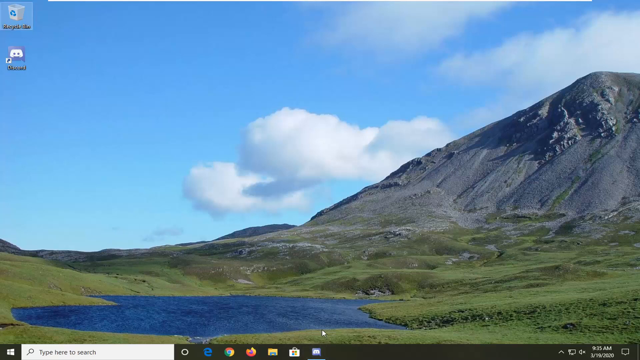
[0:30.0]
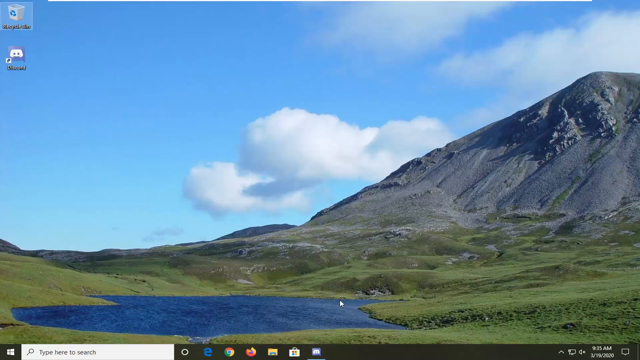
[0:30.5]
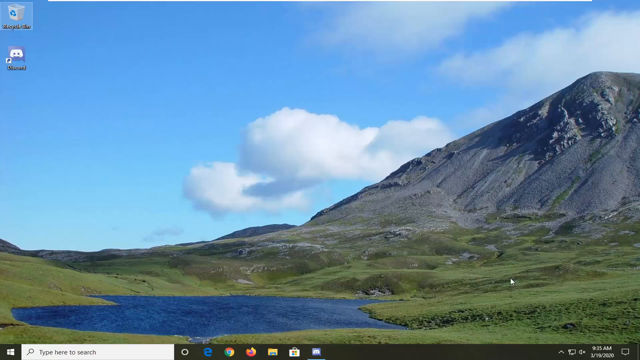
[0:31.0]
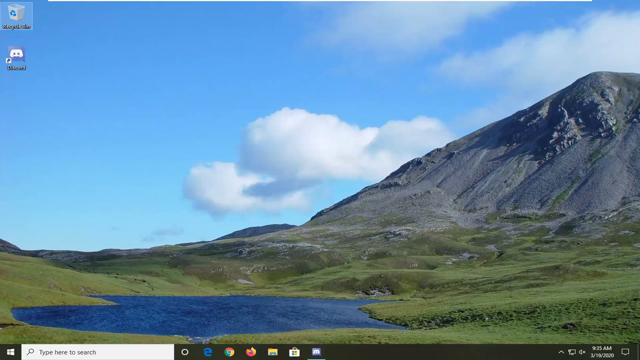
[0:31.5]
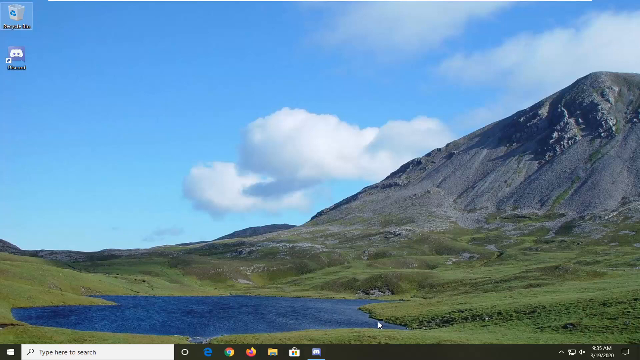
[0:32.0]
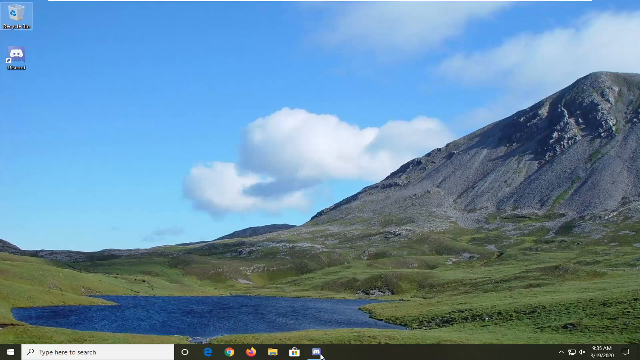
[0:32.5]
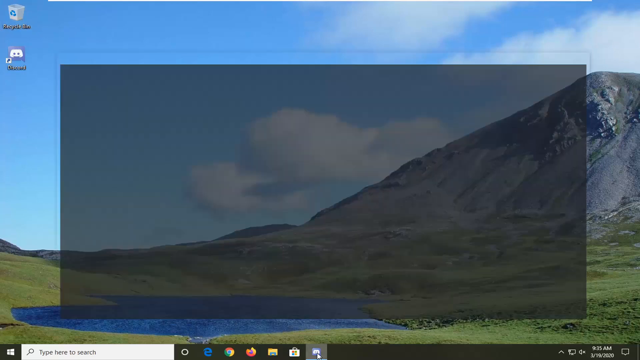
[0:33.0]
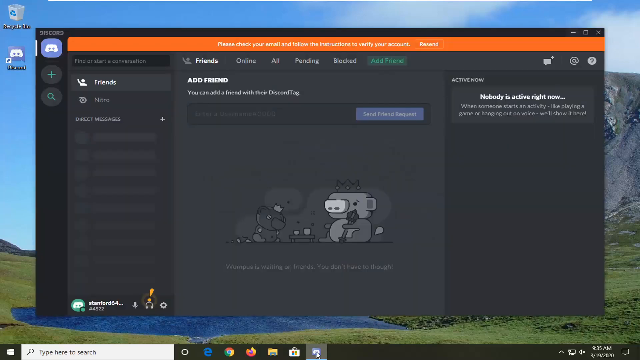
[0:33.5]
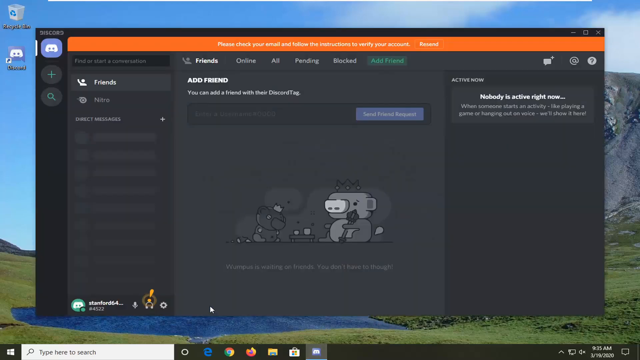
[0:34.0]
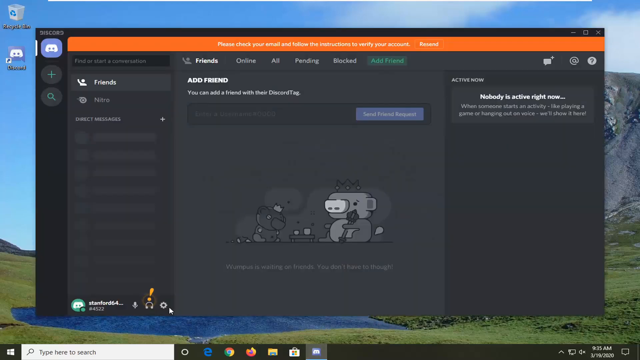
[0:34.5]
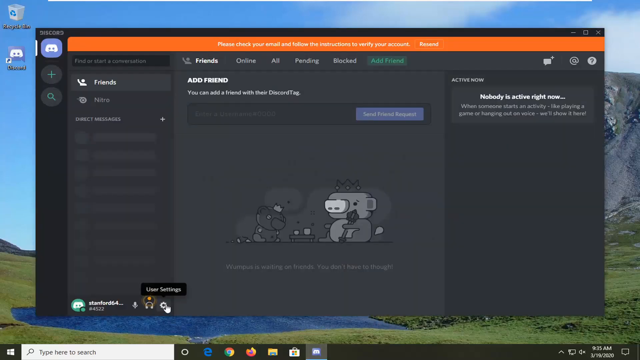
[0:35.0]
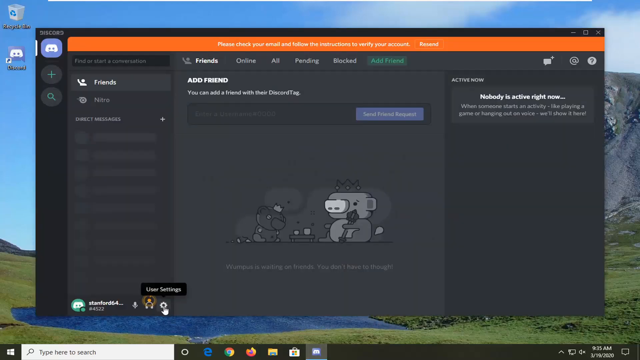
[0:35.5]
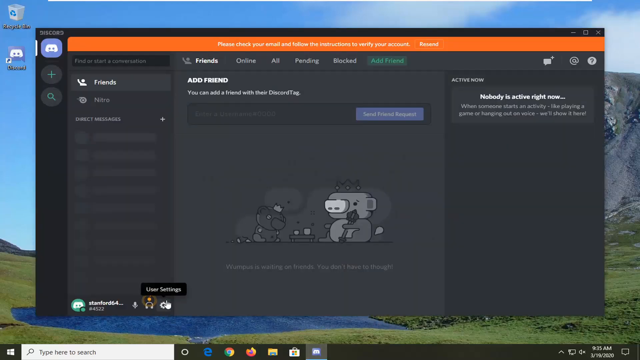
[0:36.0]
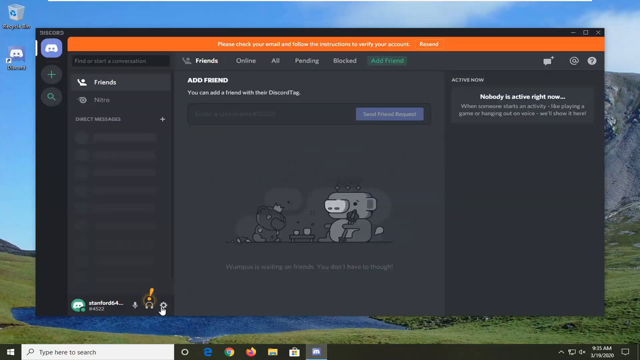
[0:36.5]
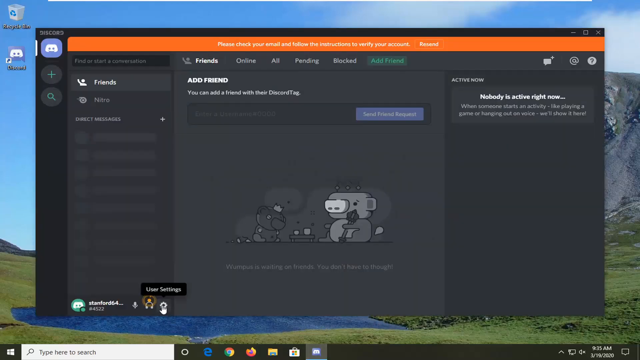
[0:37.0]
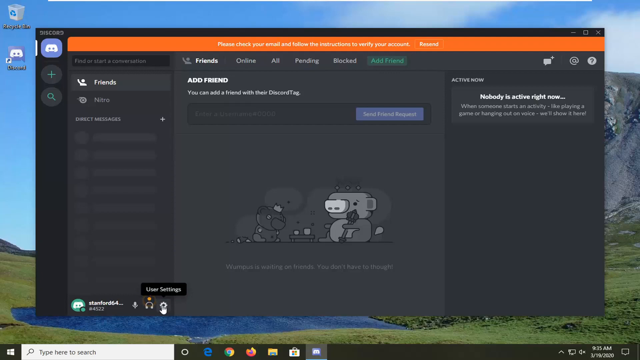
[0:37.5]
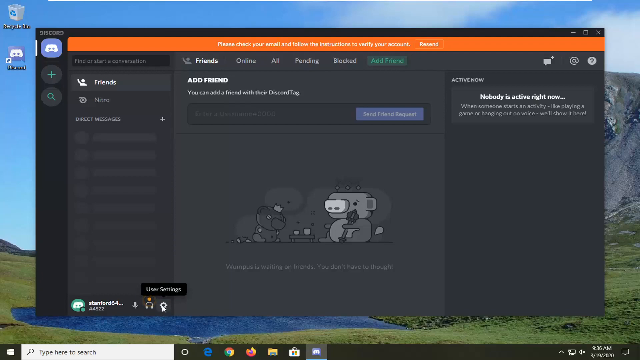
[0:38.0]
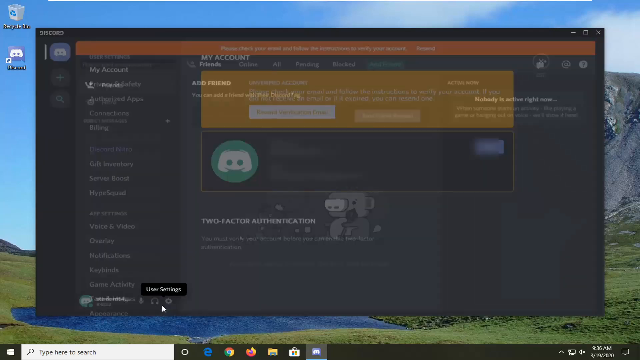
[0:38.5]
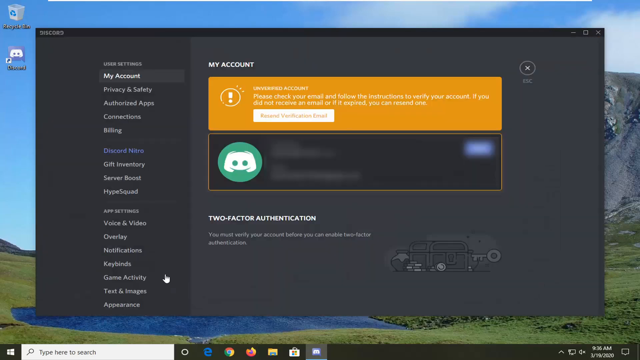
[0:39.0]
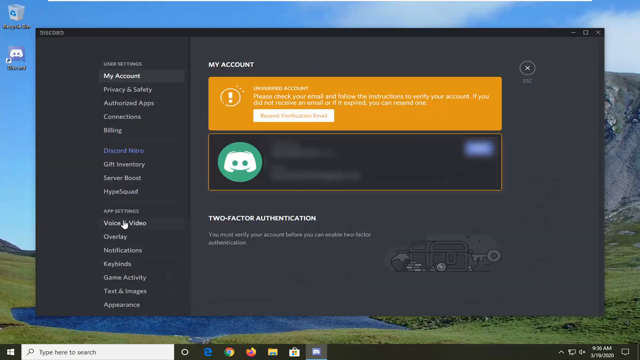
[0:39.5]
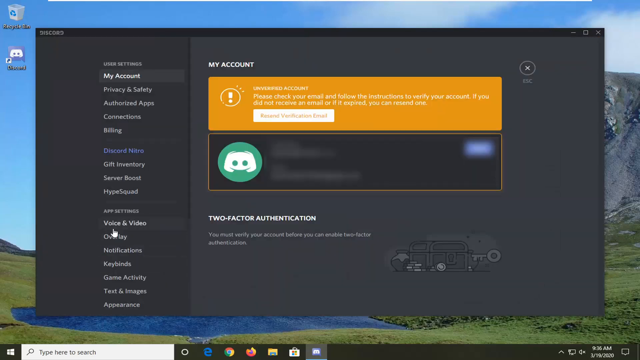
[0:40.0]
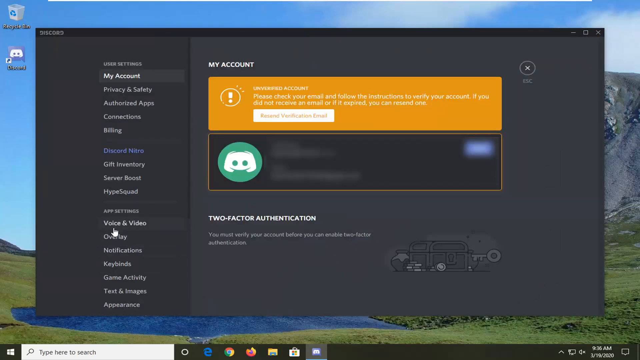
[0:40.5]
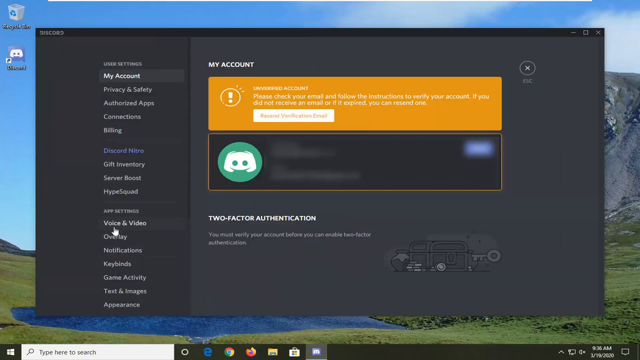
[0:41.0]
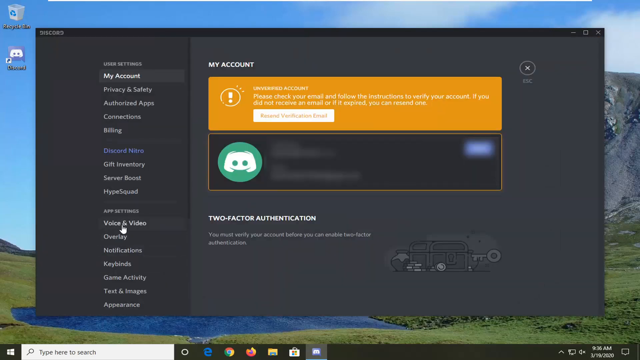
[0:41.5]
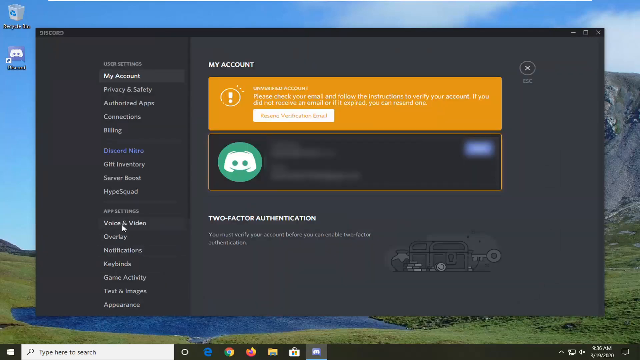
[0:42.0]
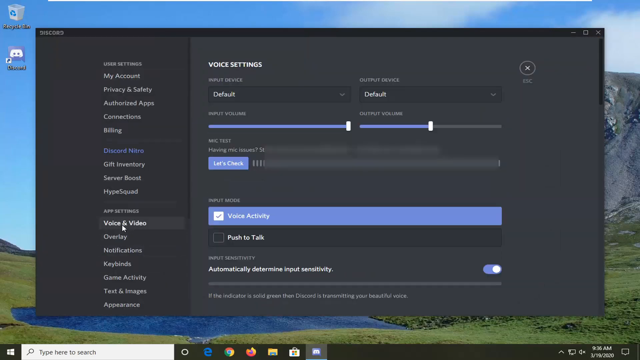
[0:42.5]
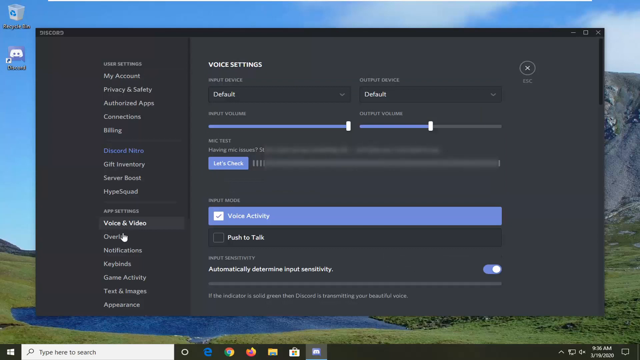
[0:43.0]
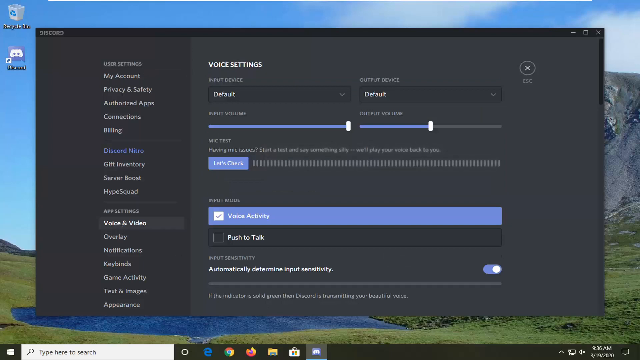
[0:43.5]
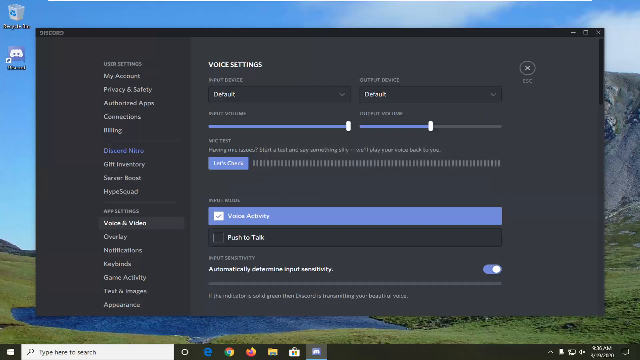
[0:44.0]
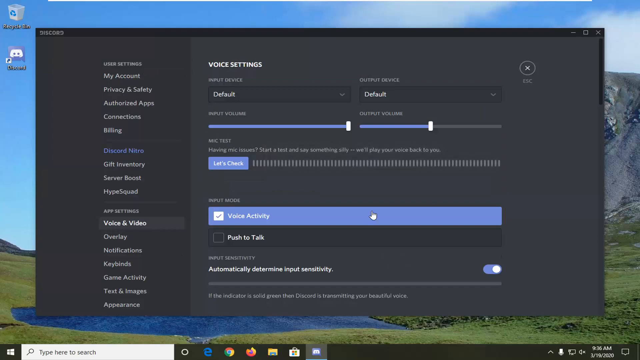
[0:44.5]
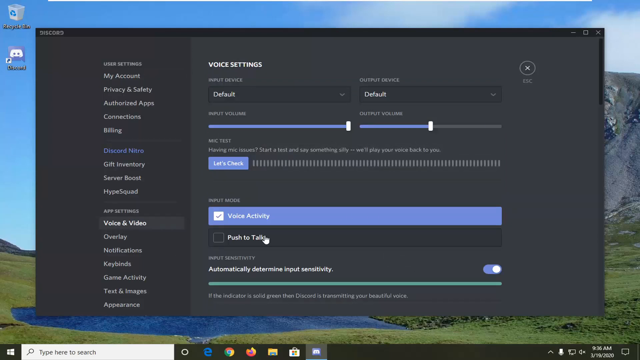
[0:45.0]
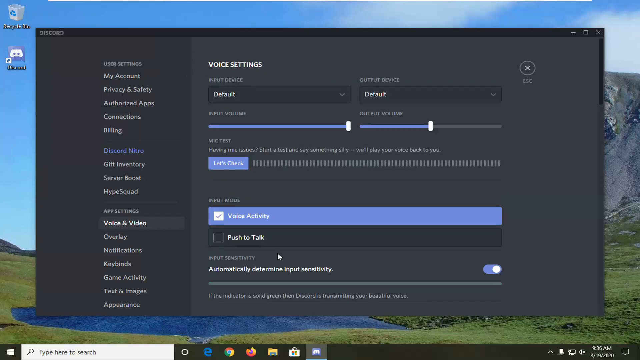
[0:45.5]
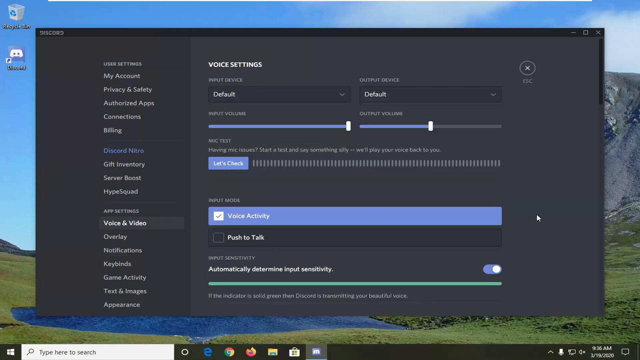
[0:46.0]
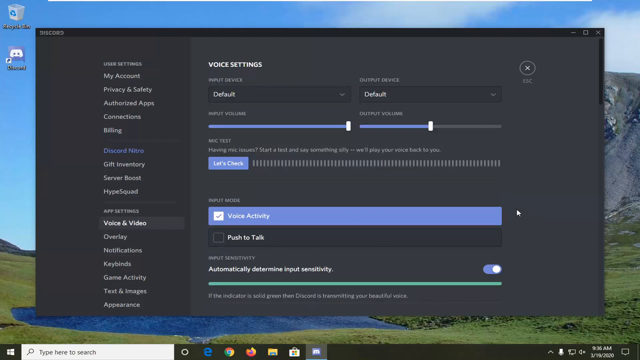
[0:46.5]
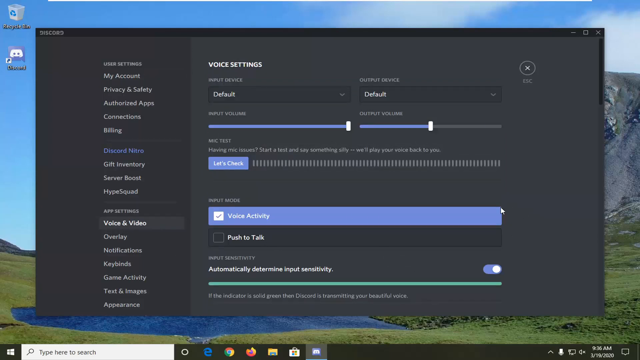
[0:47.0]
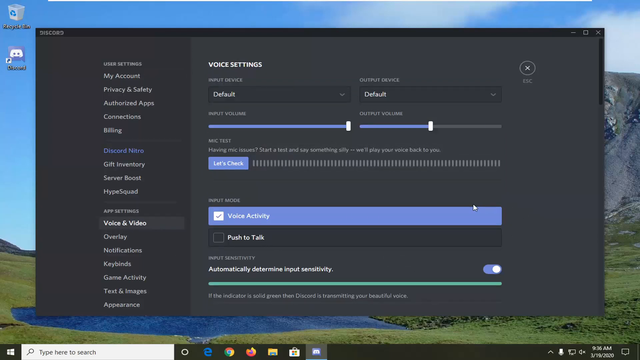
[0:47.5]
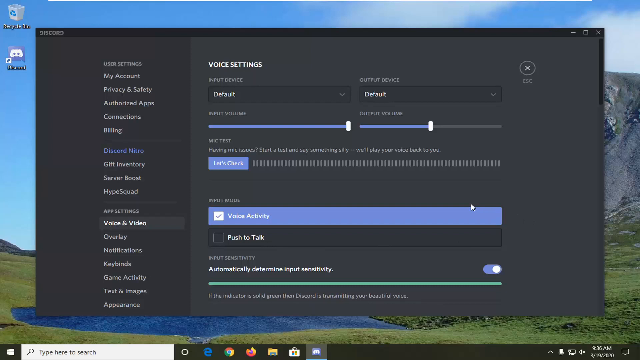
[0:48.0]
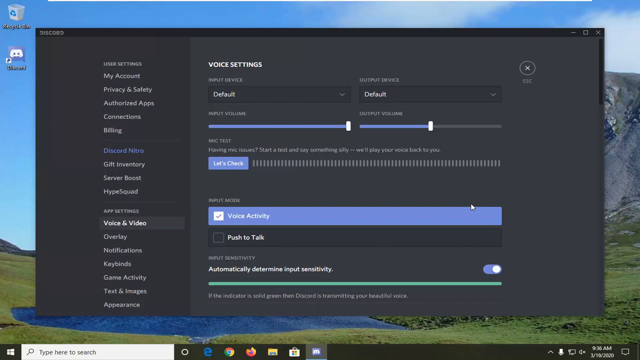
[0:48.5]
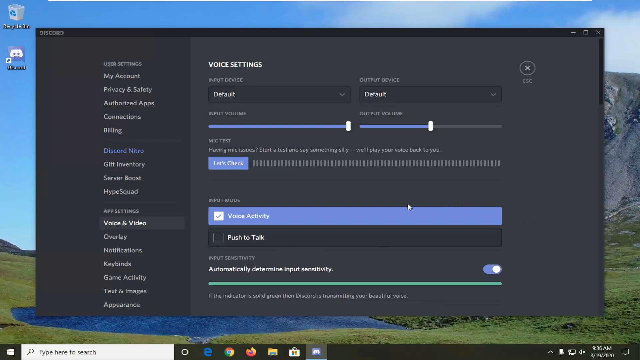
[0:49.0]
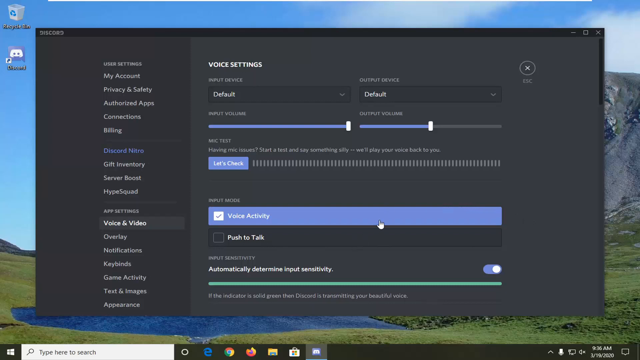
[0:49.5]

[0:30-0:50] The desktop background shows a tall, grey mountain with small hills going up and down at its bottom and what looks like a river in the middle. It looks like a very sunny day, with a few clouds in the back. At the top left of the screen is the computer's recycle bin, with the Discord app under it. The mouse moves toward the right, then back and forth, and opens the Discord app. It moves around the user settings and clicks on them, then moves around the voice and video option and clicks on it. A screen pops up that says "Voice Activity." The mouse hovers back and forth around Voice Activity, then scrolls down.